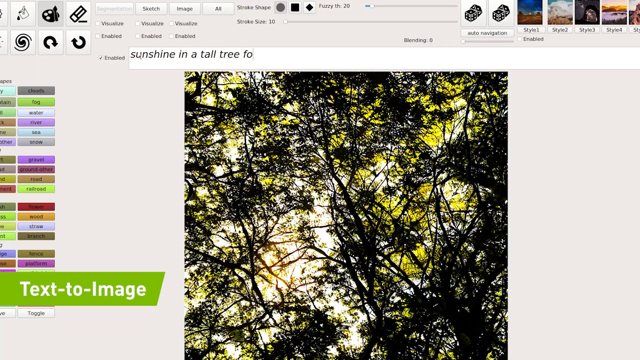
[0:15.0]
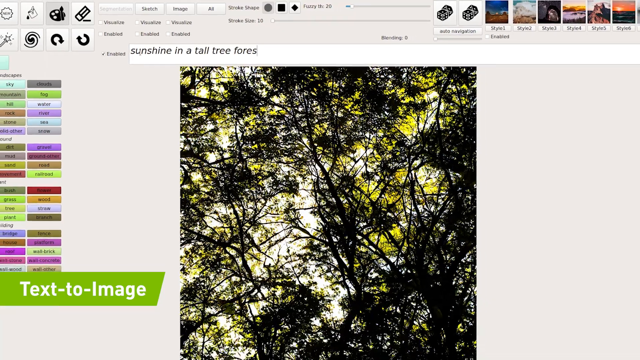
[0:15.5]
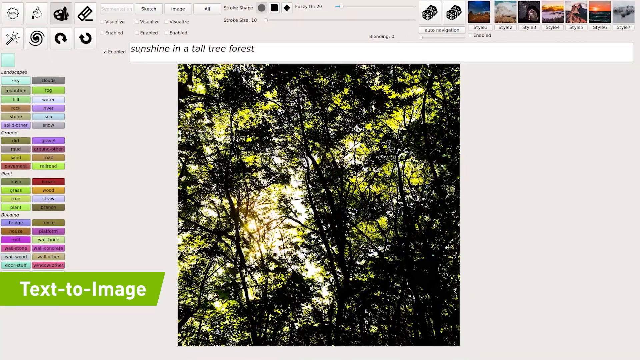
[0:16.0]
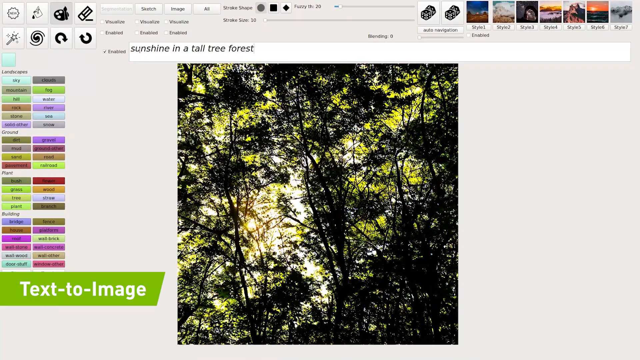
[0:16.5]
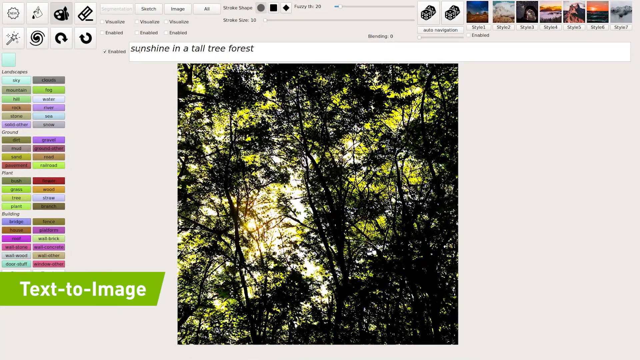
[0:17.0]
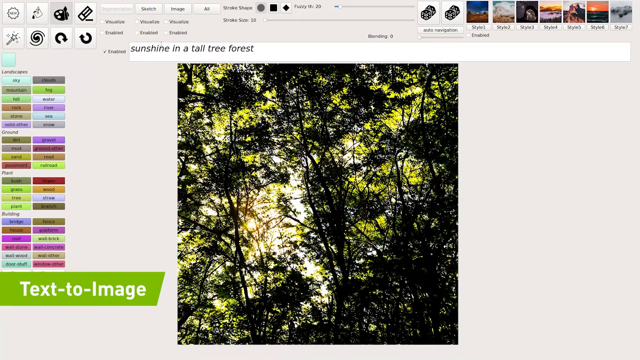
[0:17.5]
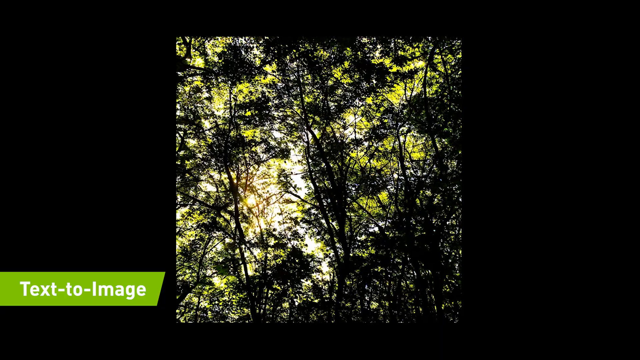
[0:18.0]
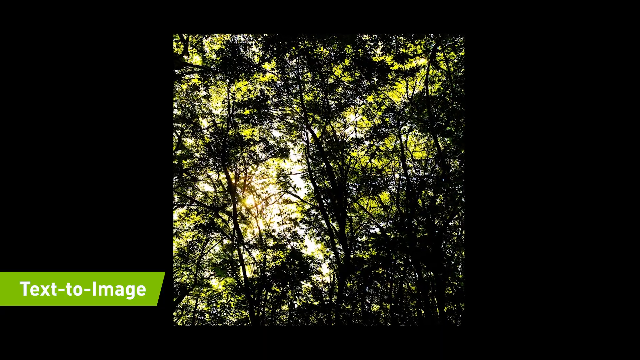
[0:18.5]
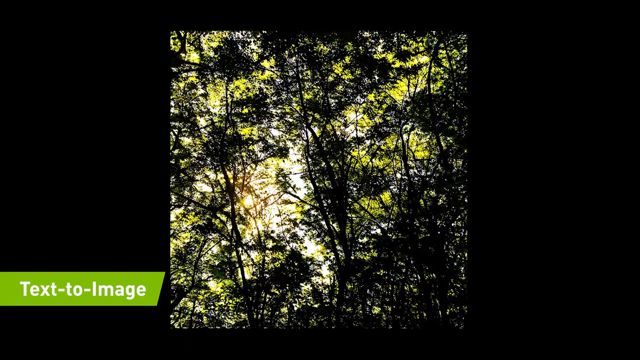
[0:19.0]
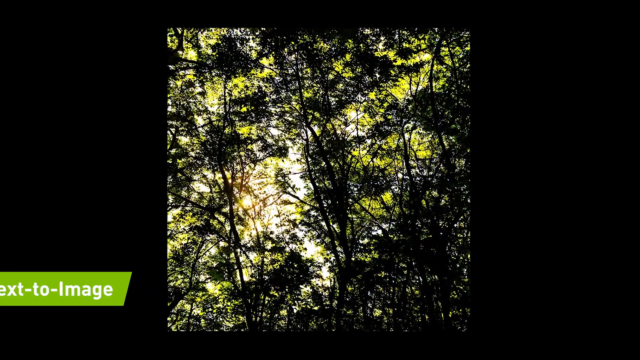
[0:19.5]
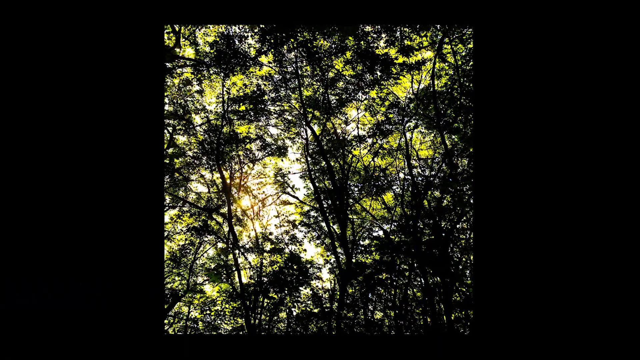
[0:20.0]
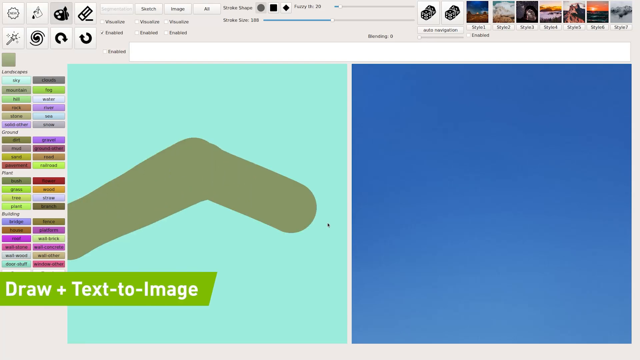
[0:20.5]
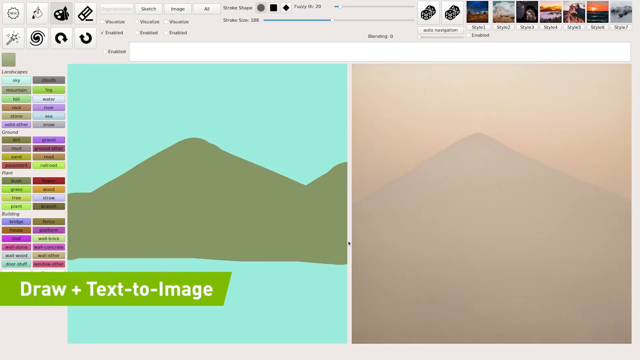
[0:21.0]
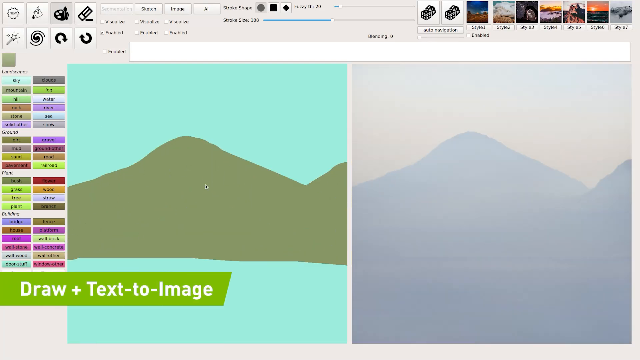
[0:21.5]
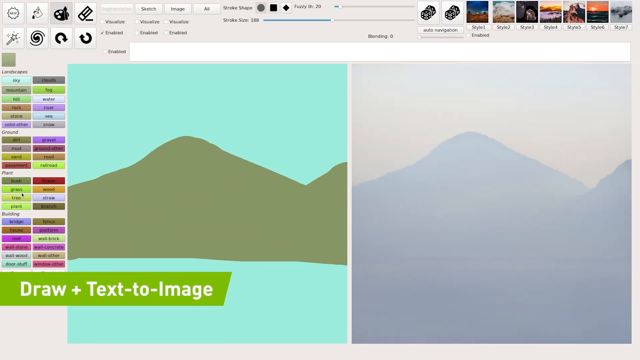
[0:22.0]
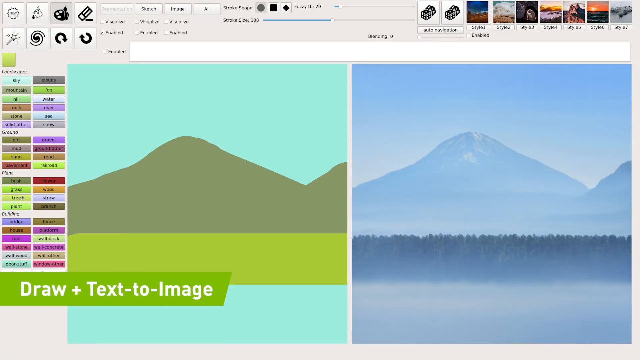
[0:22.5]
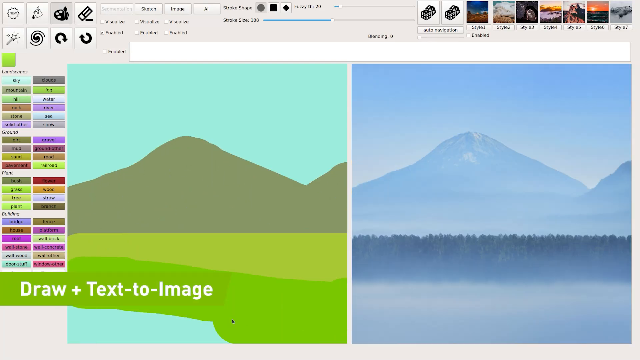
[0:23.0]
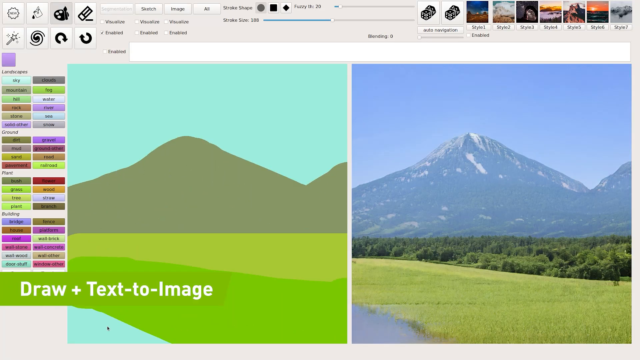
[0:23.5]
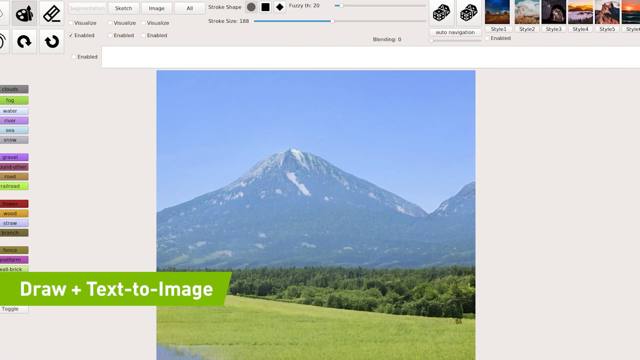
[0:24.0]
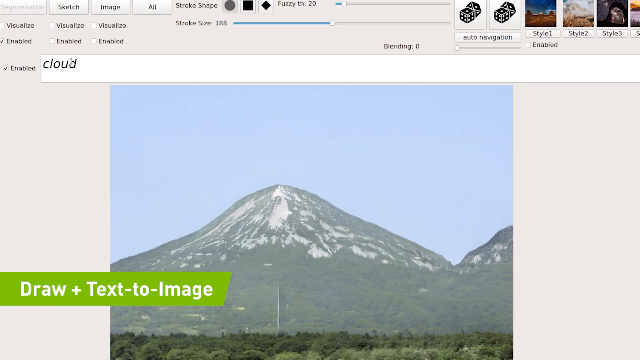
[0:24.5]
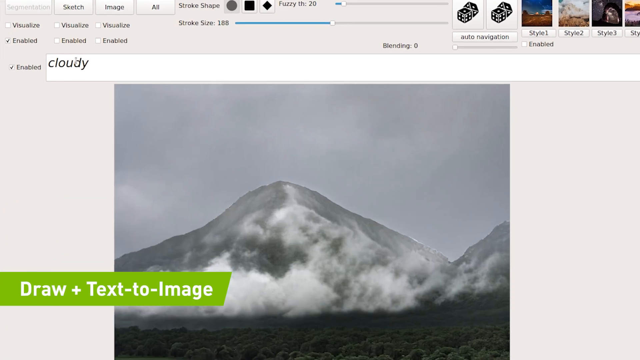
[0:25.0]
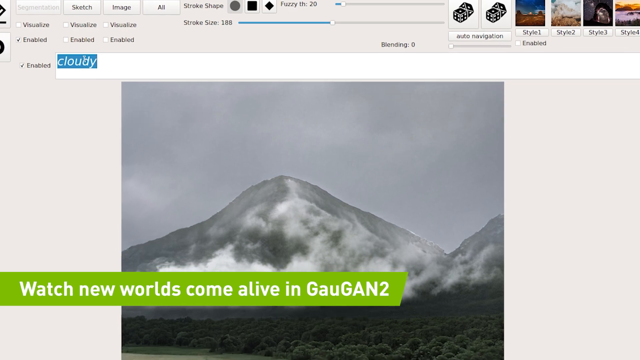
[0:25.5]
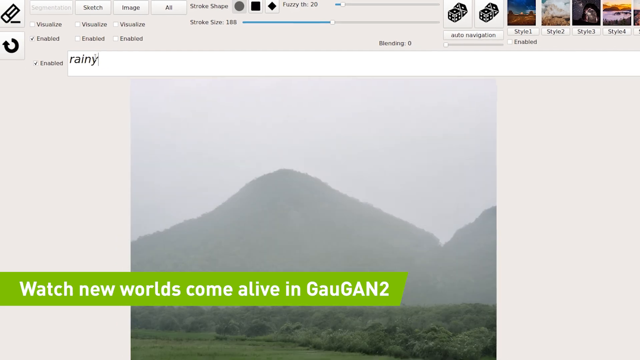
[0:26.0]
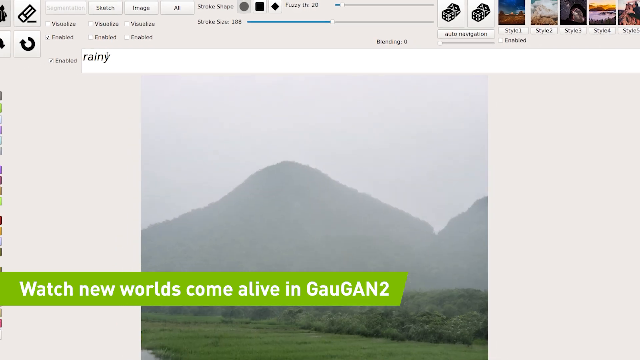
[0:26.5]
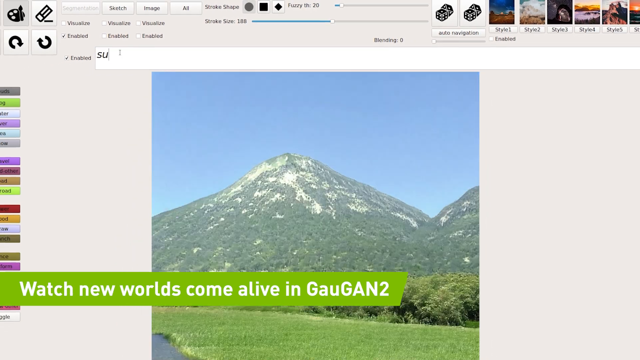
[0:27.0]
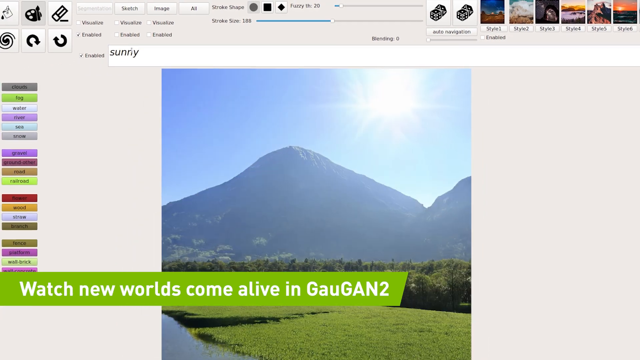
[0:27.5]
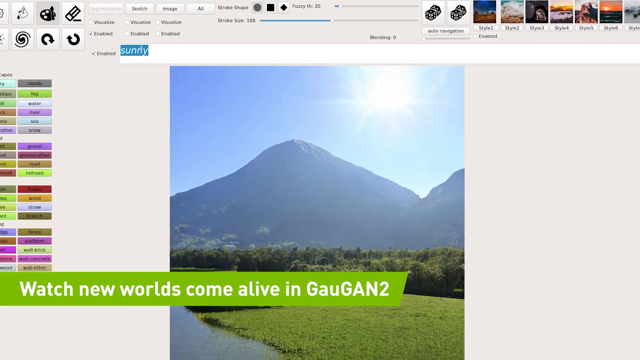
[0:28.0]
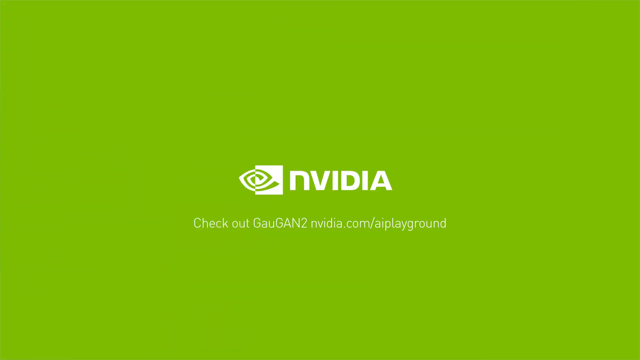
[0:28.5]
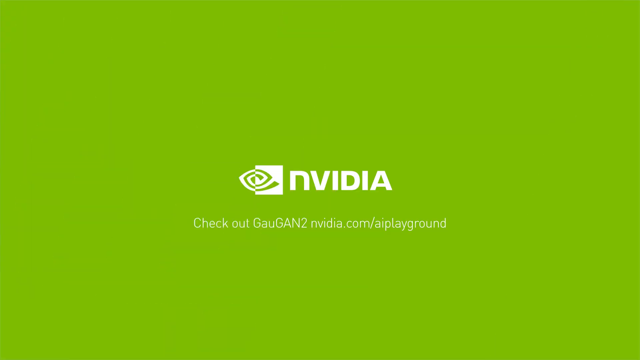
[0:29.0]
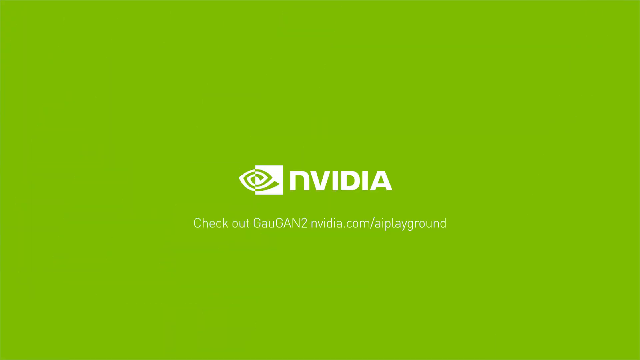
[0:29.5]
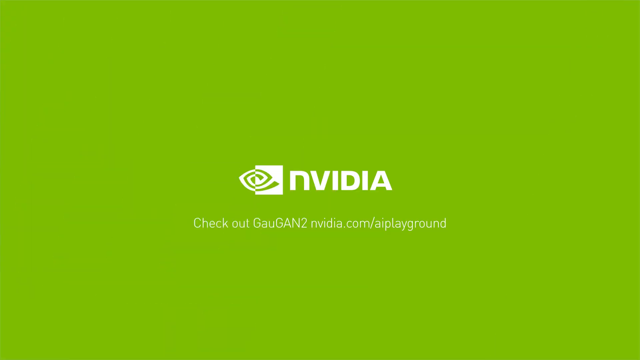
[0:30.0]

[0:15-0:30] The AI is asked to generate an image with the caption "sunshine in a tall tree forest," and it provides very clear images. A new function is then shown, draw plus text to image, in which a drawing is turned by the AI into a real-life image. Below the video, the text reads "what's new words come alive in gaugan2."